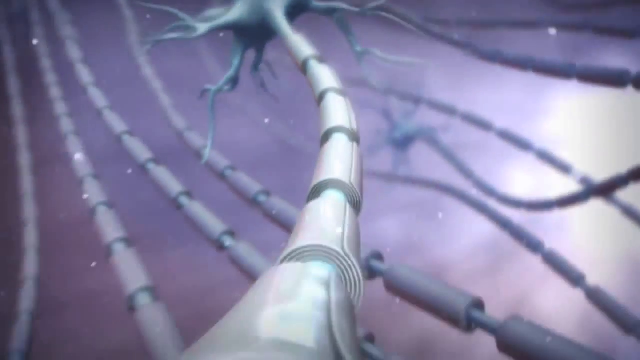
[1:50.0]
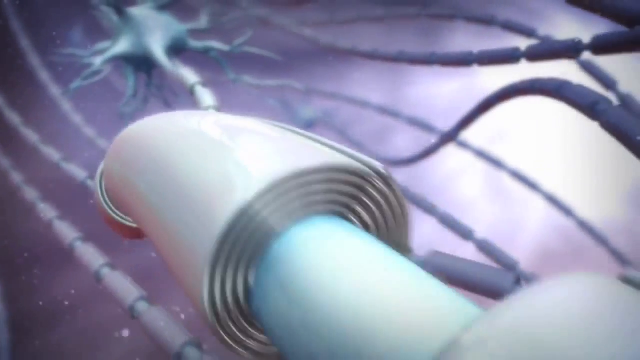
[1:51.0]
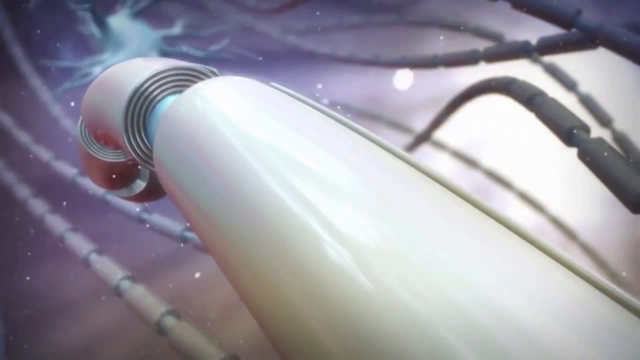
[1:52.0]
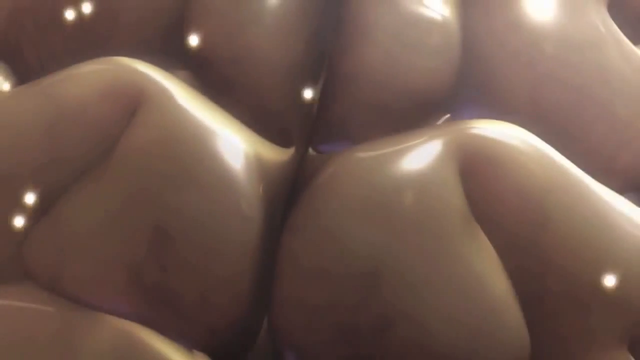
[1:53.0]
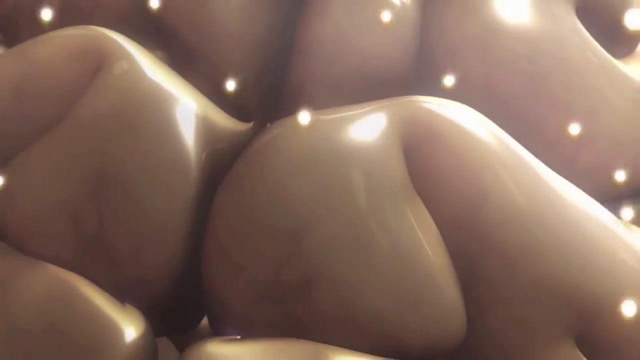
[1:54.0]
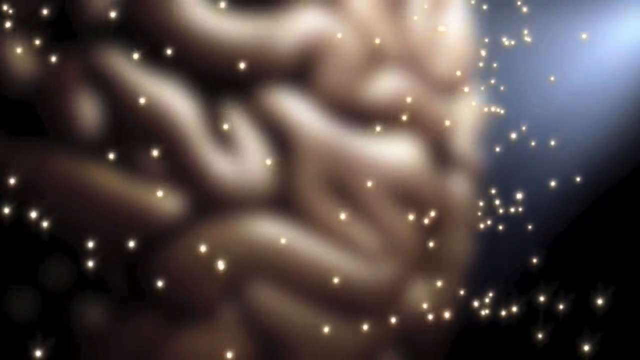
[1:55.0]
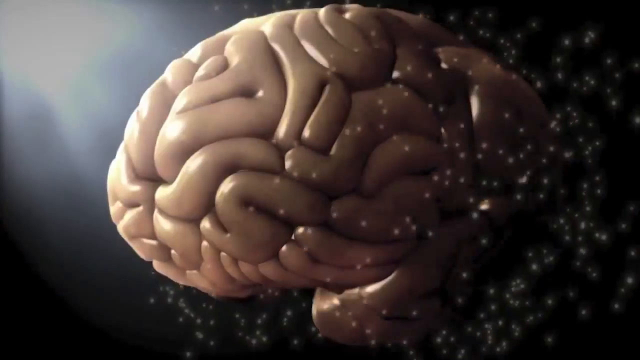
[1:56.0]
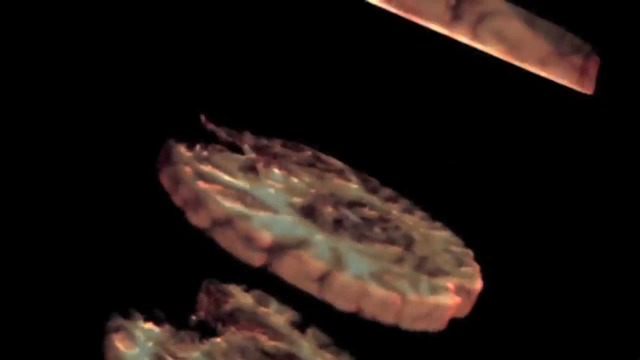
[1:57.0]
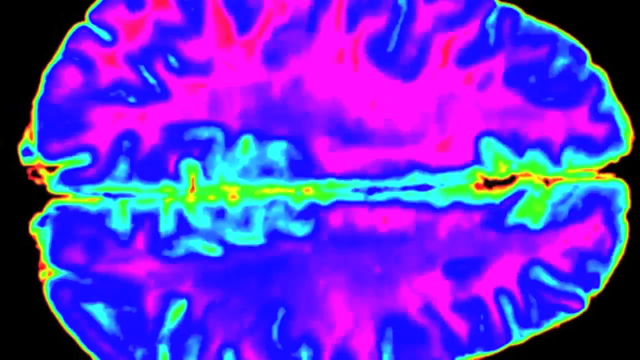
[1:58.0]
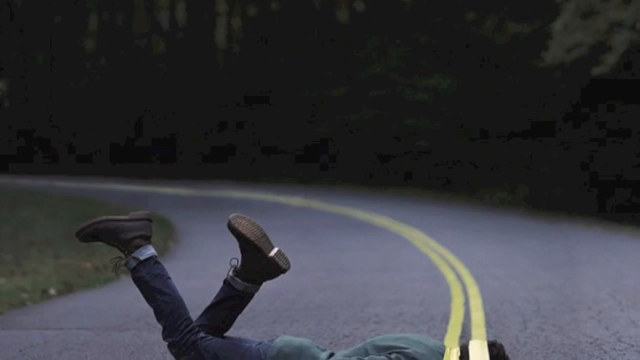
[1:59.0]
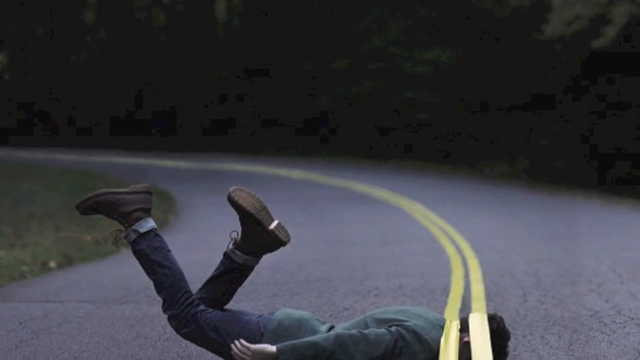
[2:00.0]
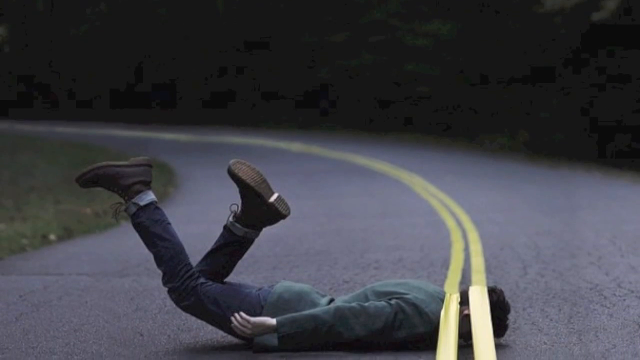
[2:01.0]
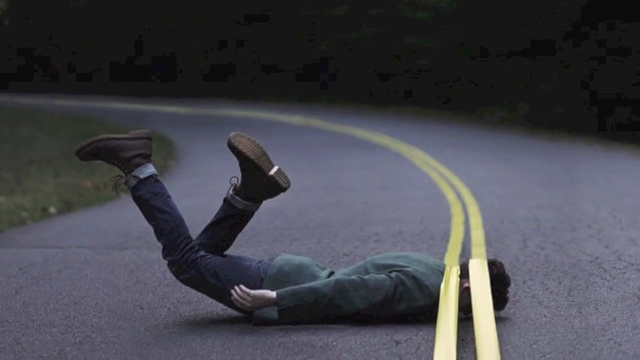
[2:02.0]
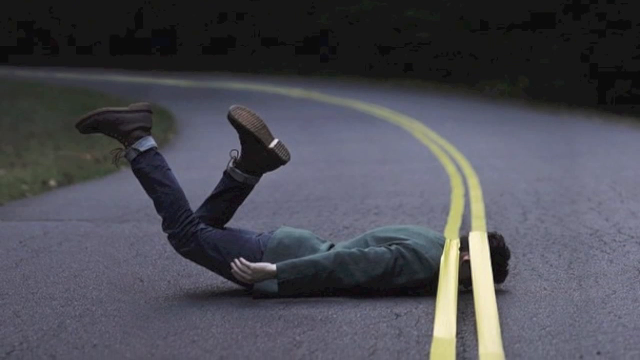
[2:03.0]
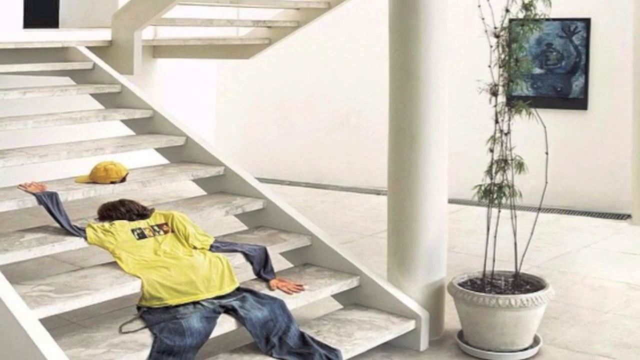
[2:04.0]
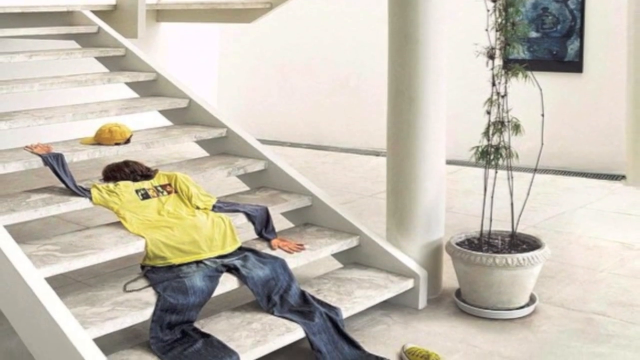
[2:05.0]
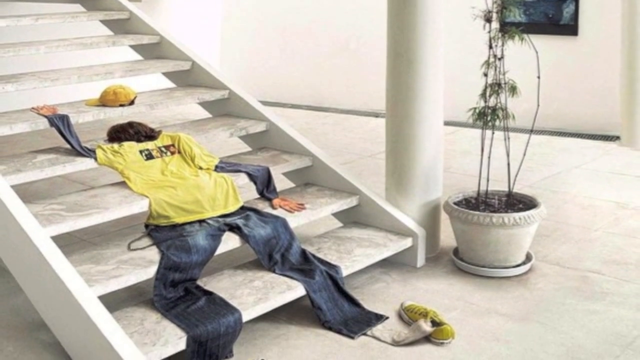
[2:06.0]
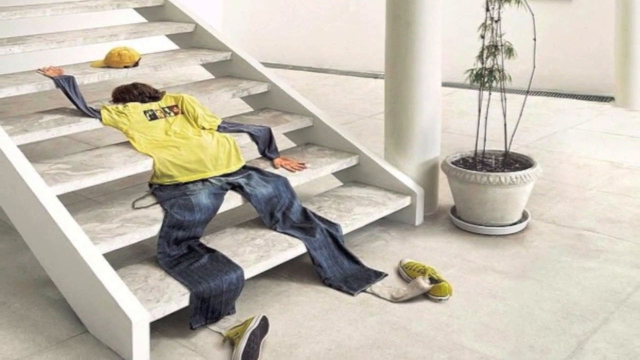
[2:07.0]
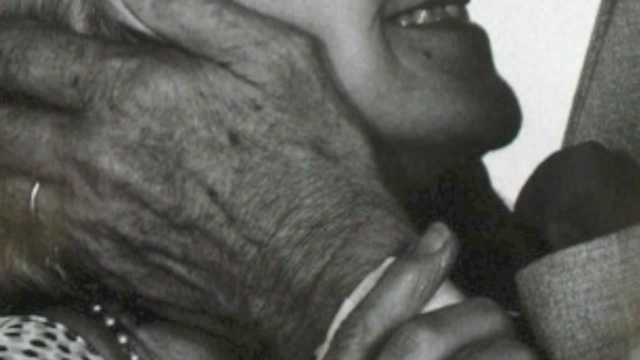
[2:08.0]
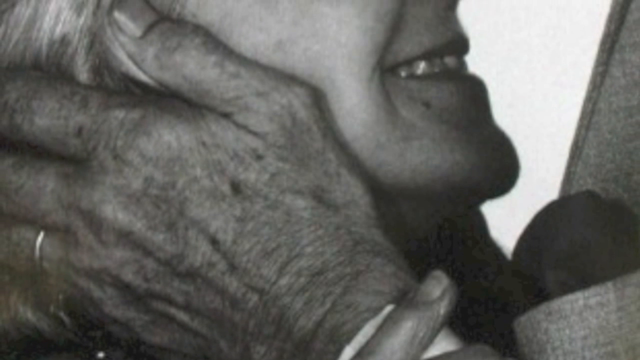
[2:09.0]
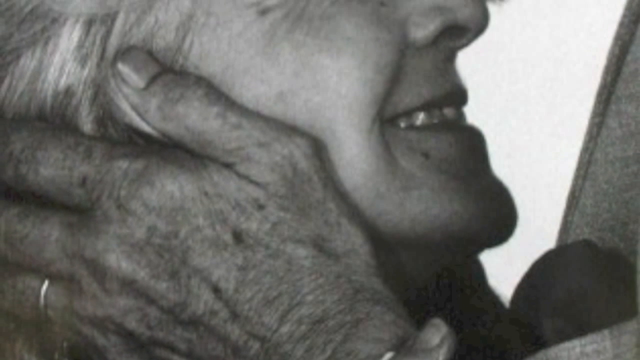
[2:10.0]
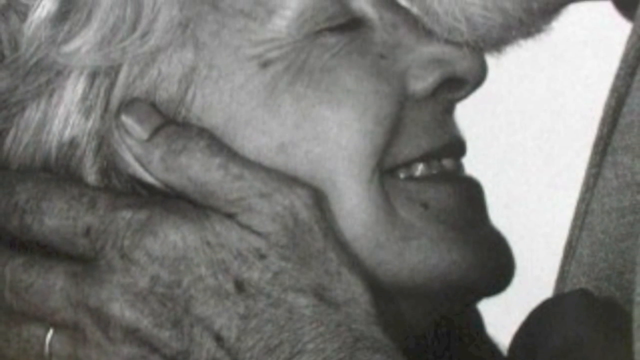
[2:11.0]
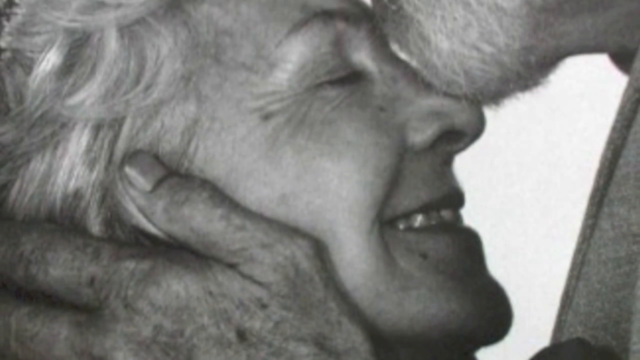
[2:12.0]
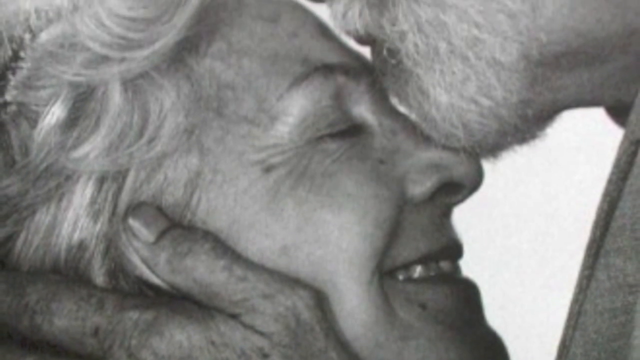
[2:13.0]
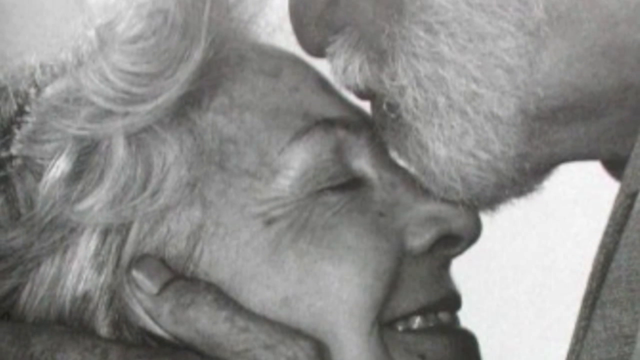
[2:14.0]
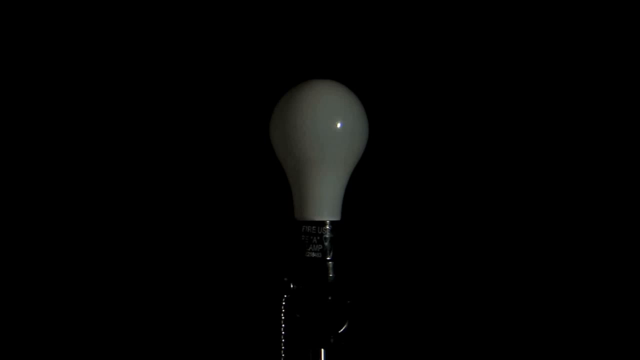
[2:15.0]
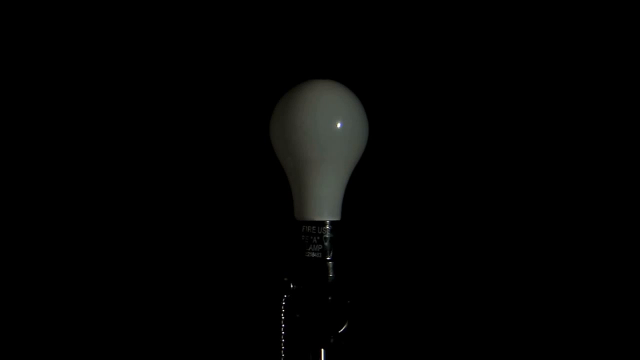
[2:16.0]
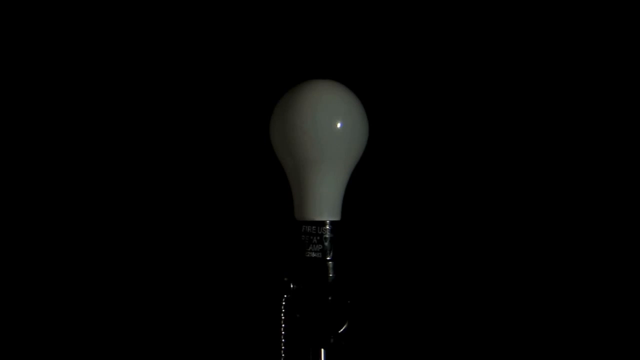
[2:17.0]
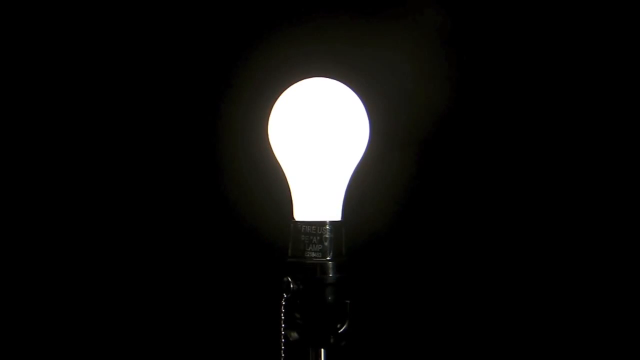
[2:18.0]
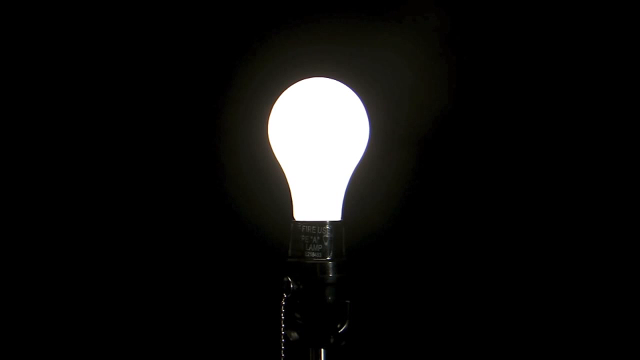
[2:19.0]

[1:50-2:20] The yin-yang pulls out from the screen and then returns to normal. Then Earth's body of water appears, and Earth is burnt by a match from the bottom, burning up into a huge ball of fire. Next, a male holds a flower and drops it, and a female character picks it up and smells it. Then comes a wallpaper of hands joined together to form something of a sign, with no faces visible. An animation follows in which planet Earth is held by two hands and then dissolves into lines or pipes of a body of matter. Finally, an animation shows a brain really up close, which gets sliced through to become a colourful cut-out brain part.